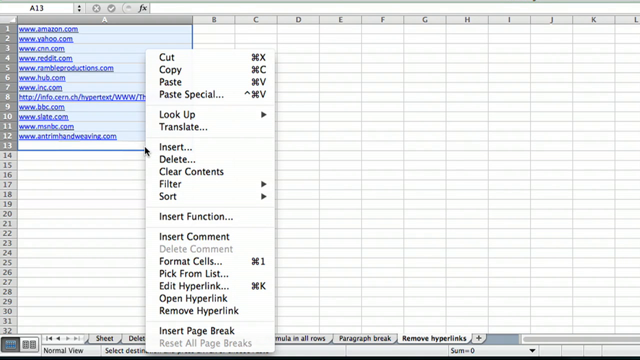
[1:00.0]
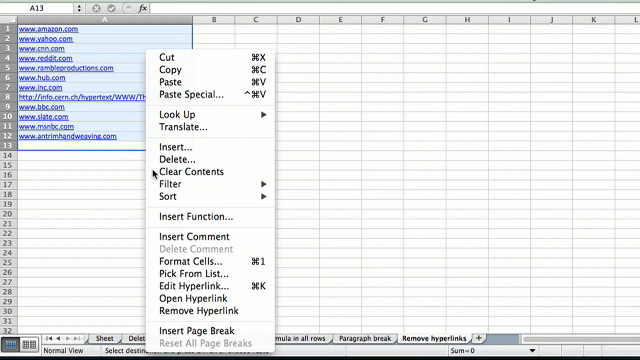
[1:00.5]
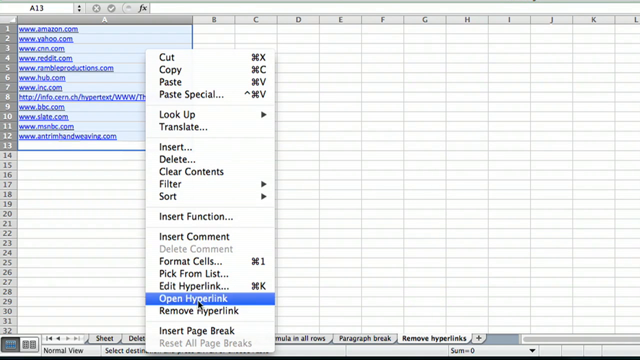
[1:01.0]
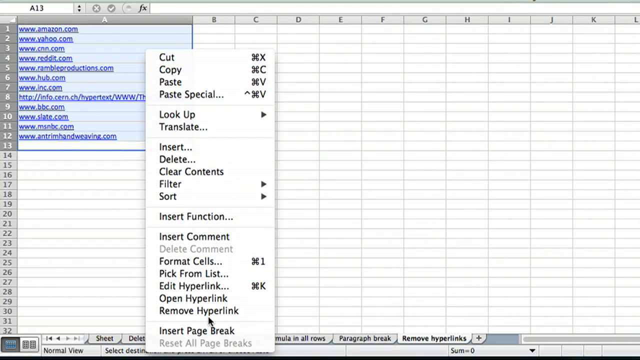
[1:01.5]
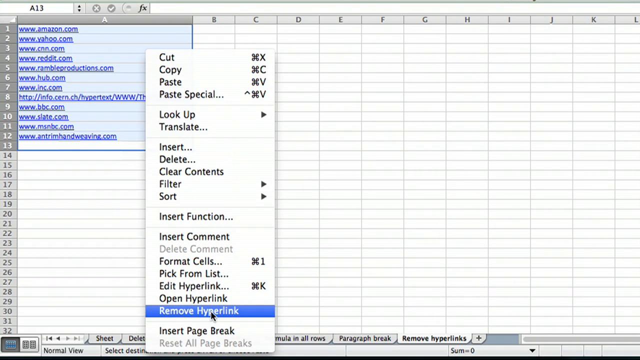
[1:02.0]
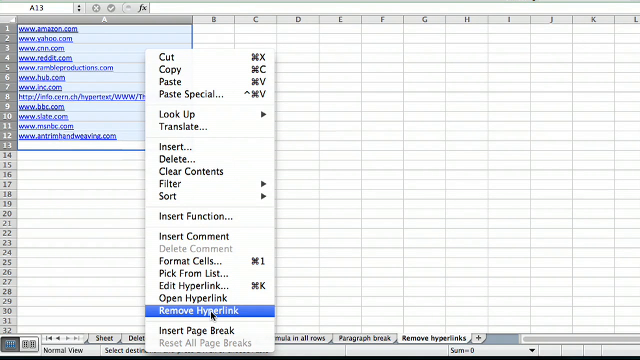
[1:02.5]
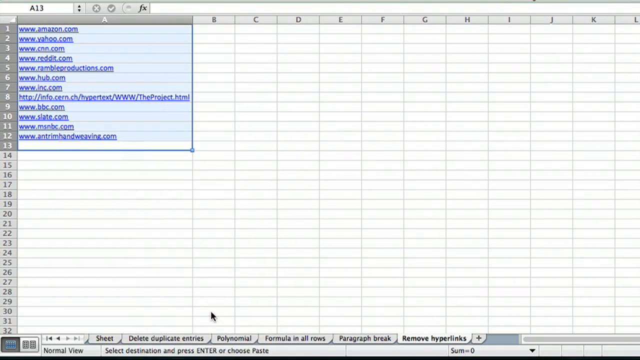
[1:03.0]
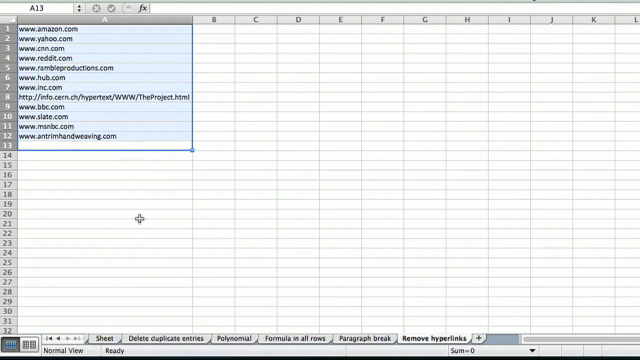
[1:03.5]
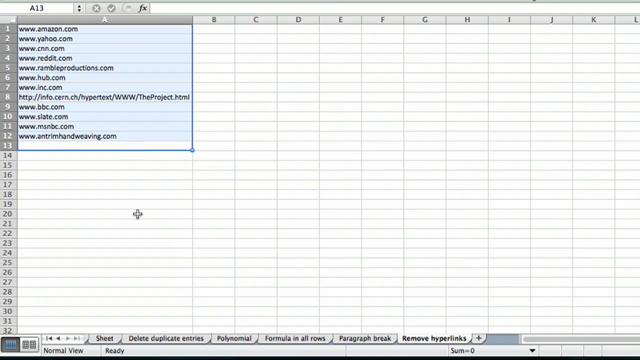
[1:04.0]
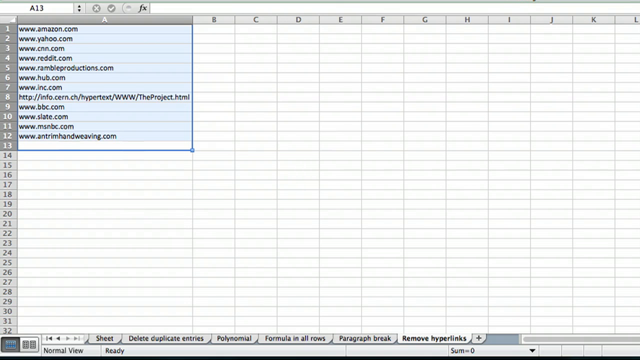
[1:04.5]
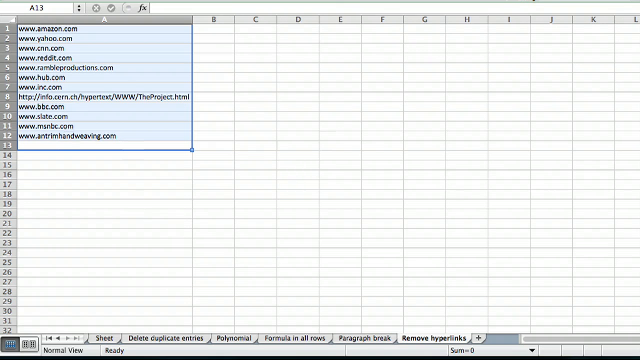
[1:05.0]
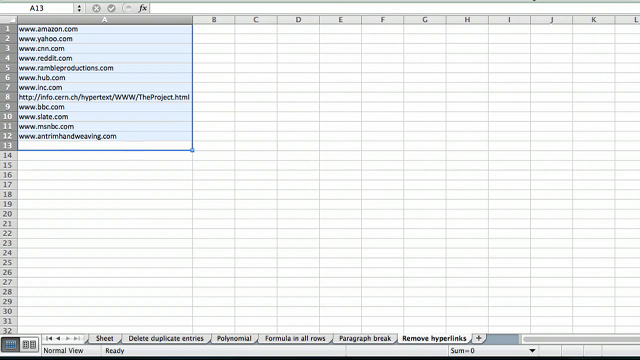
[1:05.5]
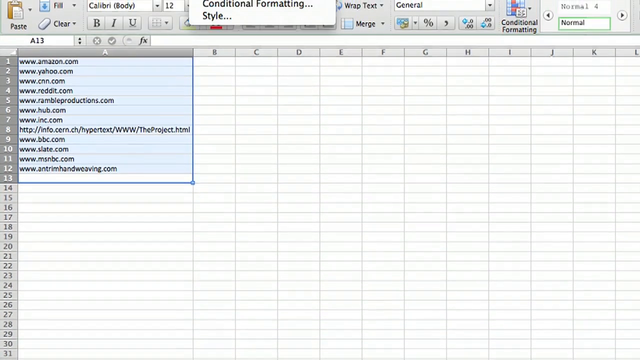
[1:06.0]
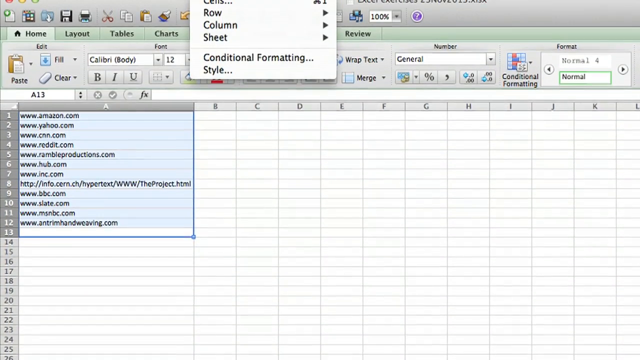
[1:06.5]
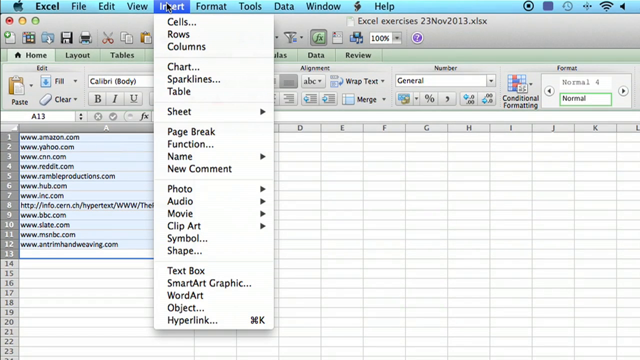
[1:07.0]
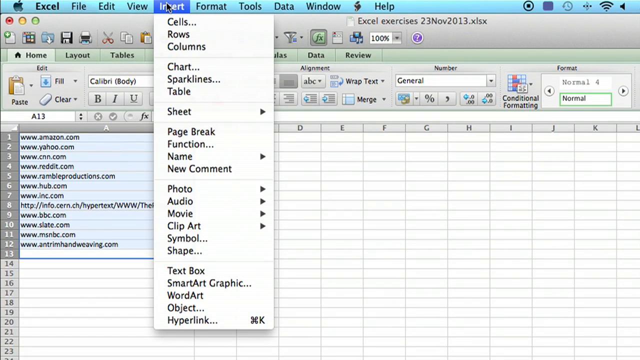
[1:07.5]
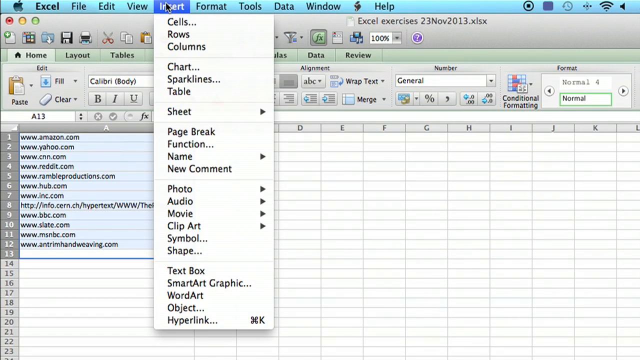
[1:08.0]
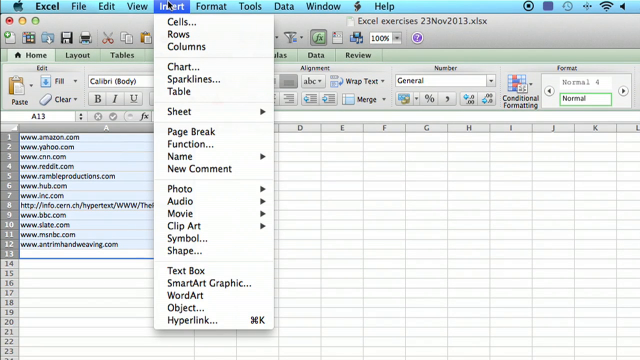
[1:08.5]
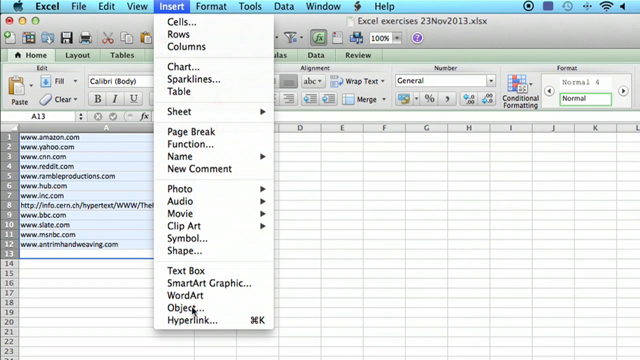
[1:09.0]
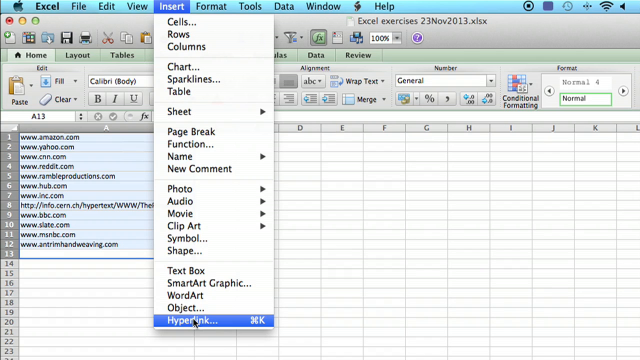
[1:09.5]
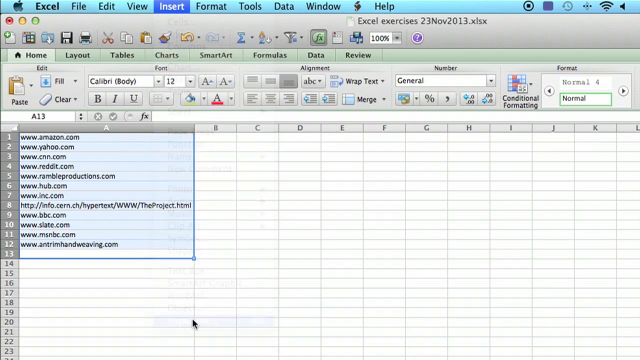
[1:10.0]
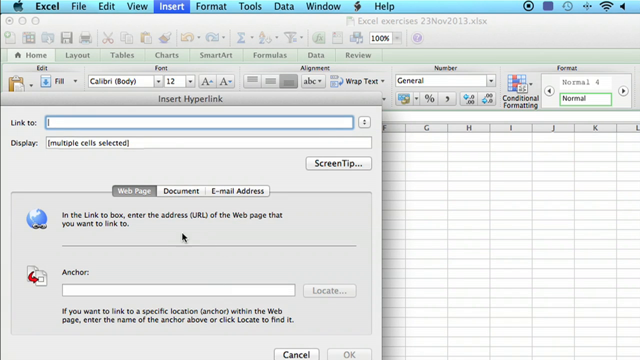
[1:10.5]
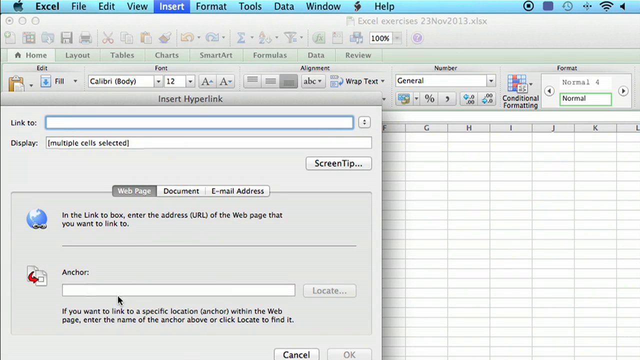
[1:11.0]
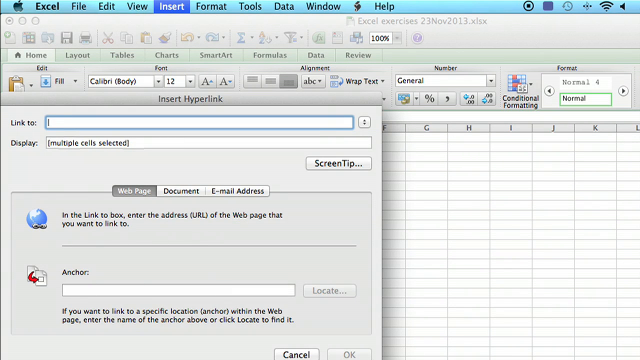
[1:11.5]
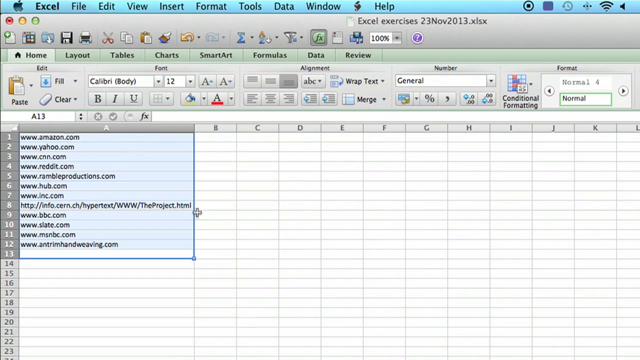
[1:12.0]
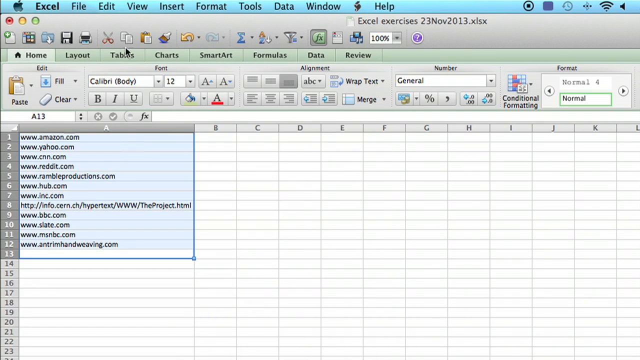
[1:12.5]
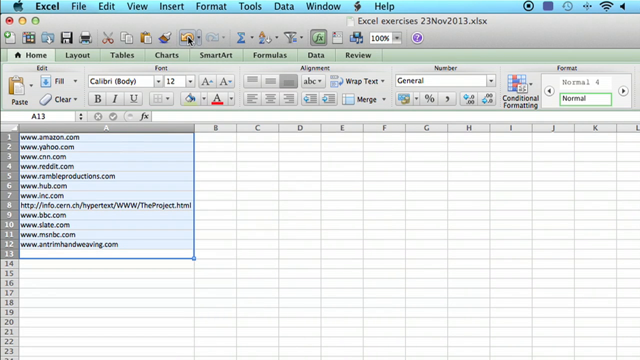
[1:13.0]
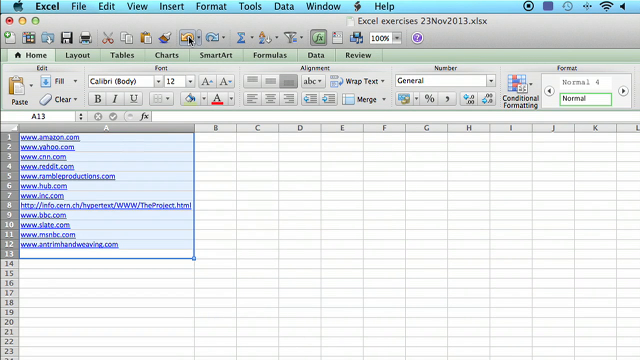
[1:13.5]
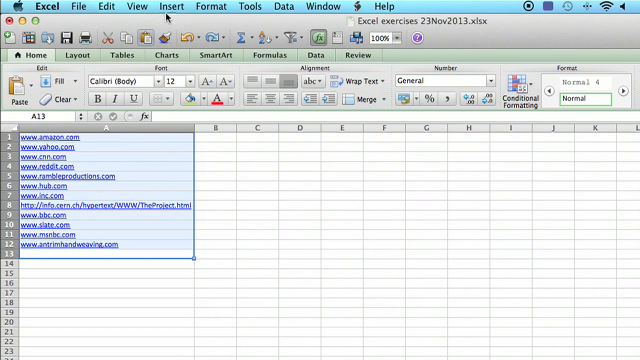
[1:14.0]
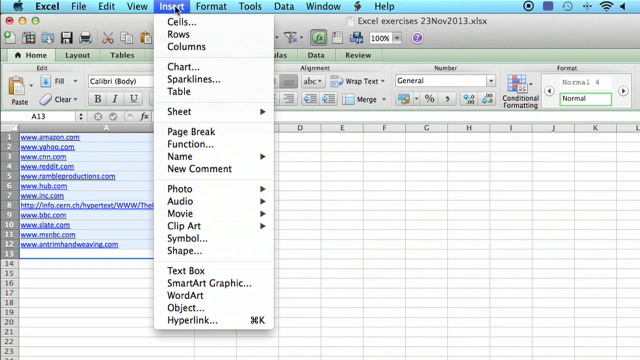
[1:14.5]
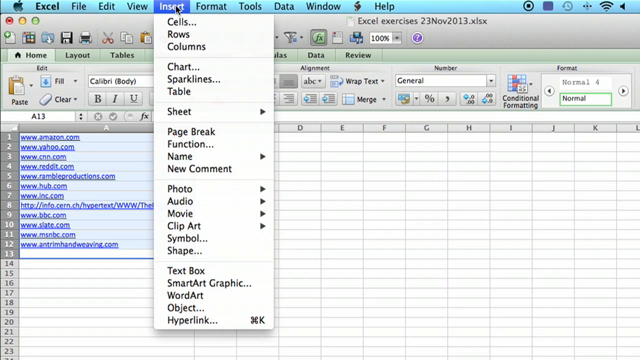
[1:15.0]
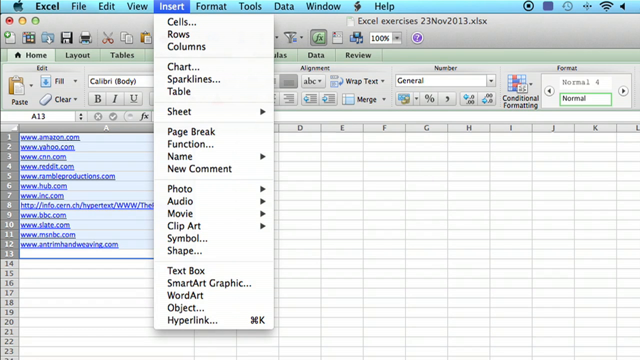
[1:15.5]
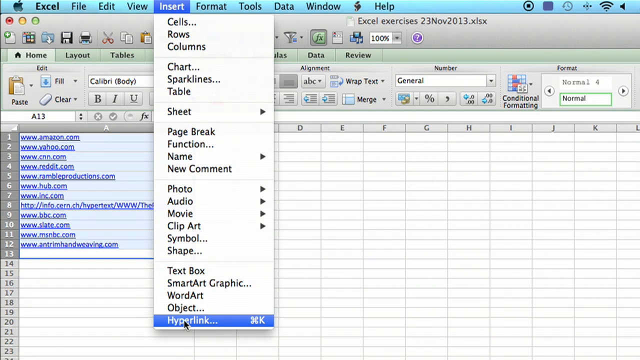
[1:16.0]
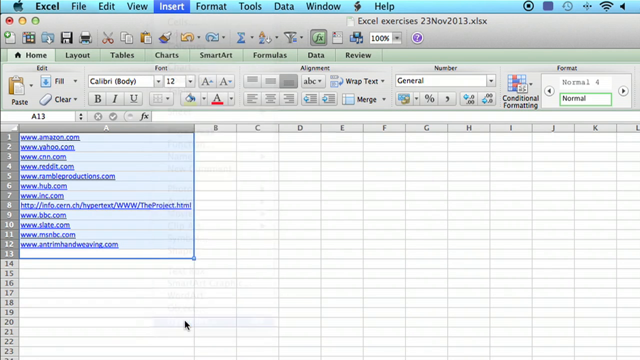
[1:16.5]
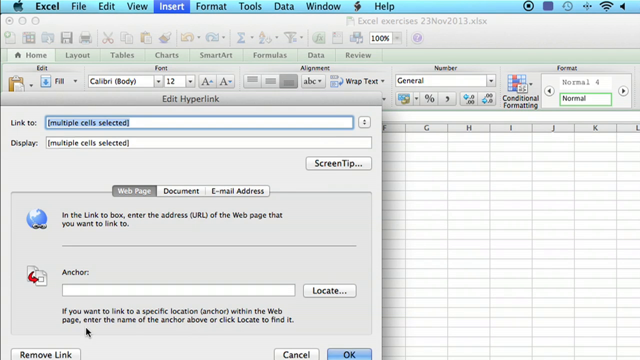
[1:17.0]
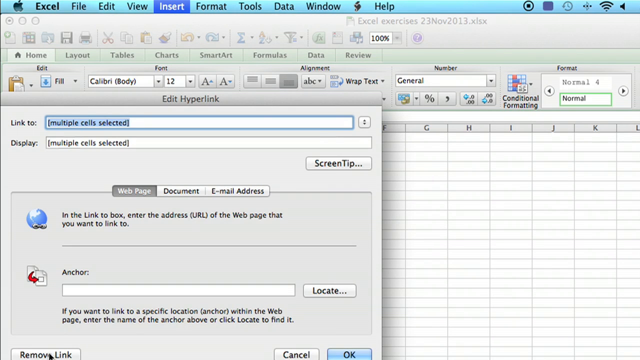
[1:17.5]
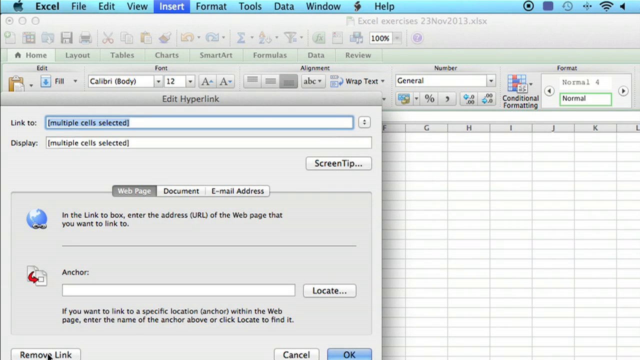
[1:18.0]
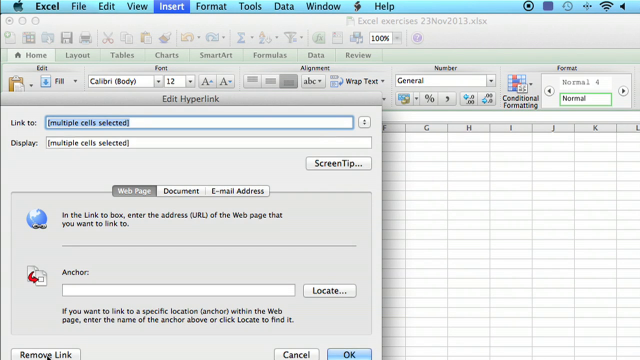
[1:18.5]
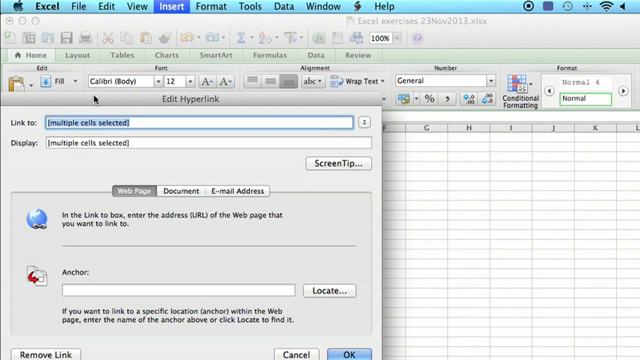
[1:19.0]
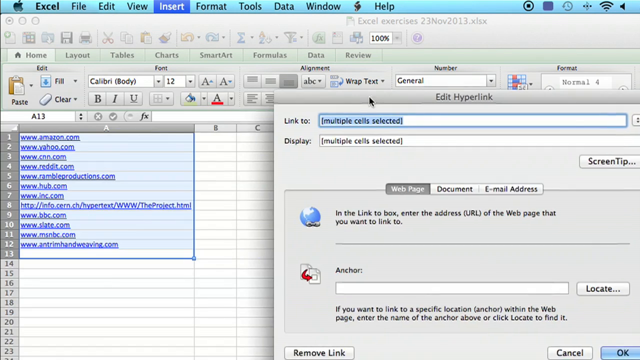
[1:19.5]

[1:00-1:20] Patrick the engineer has already highlighted all the URLs on his spreadsheet: 13 lines are highlighted, though there are only 12 URLs. They include amazon.com, yahoo.com, cnn, reddit, ramble productions hub inc.com, info at cern, bbc, slate, msnbc and possibly some hand weaving classes. He has a menu open and removes the hyperlinks from the highlighted URLs. He then goes to insert hyperlinks and hits the back arrow; the screen says "insert hyperlink" and shows the message "multiple cells selected". It is unclear whether this is an error message.